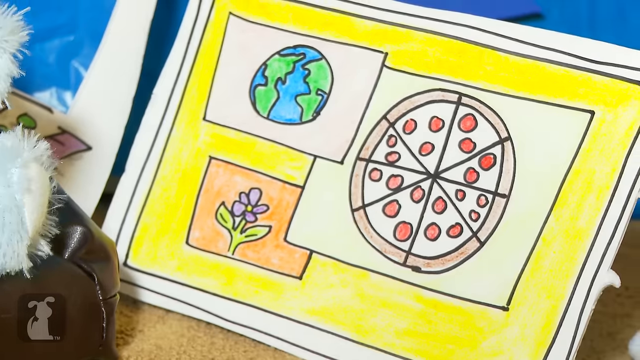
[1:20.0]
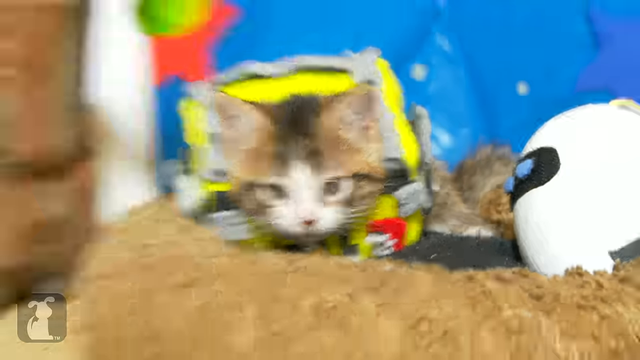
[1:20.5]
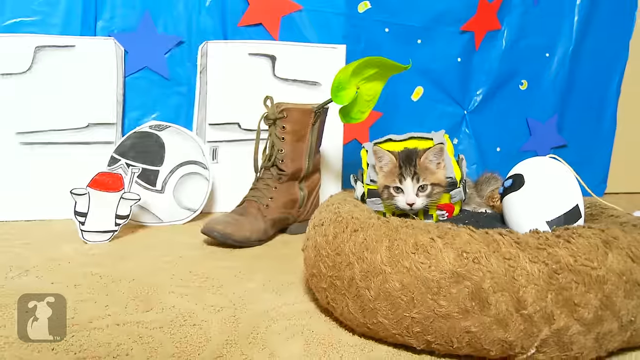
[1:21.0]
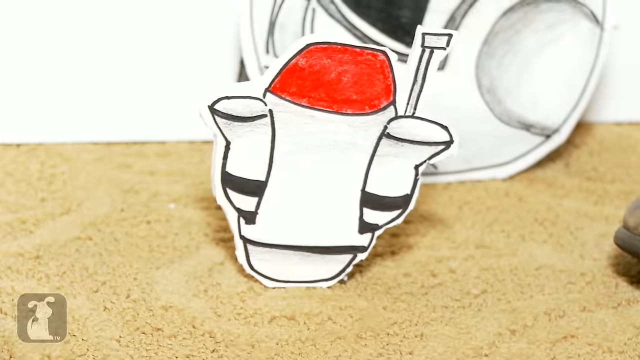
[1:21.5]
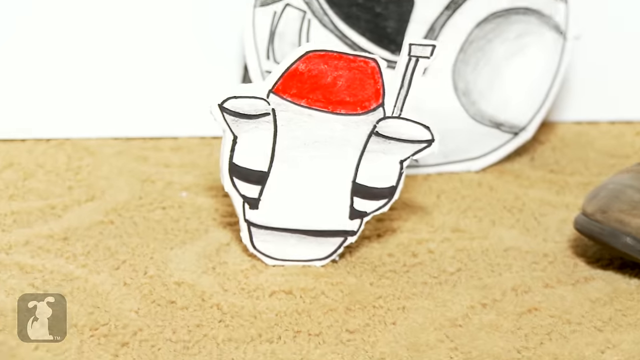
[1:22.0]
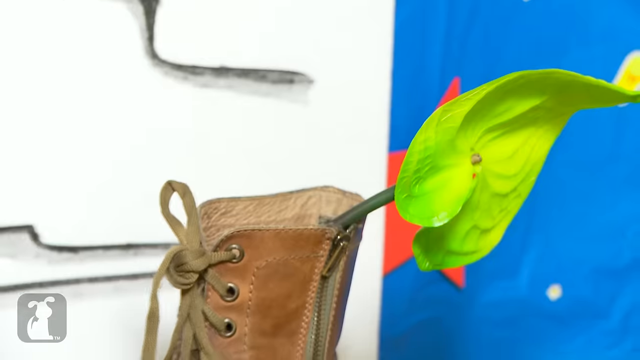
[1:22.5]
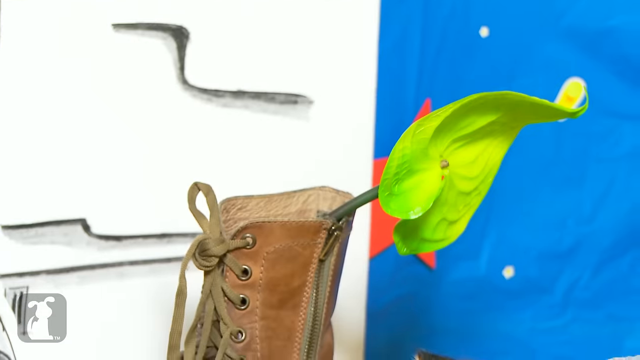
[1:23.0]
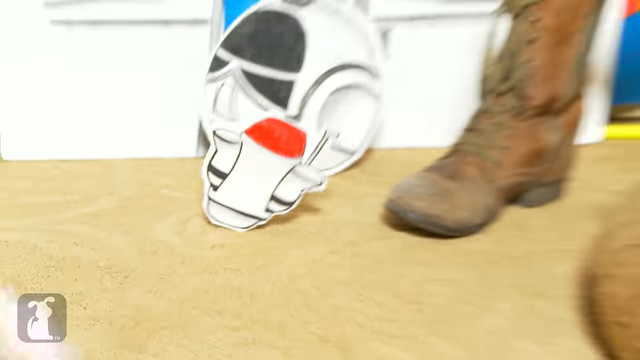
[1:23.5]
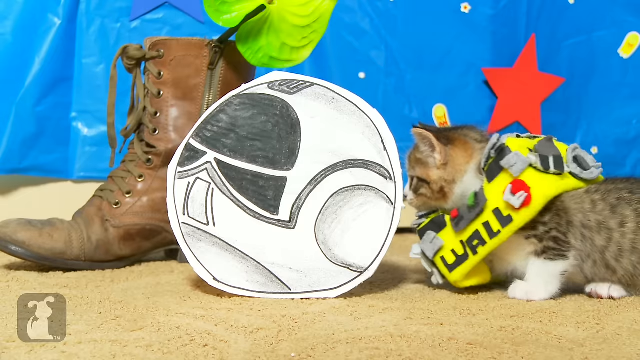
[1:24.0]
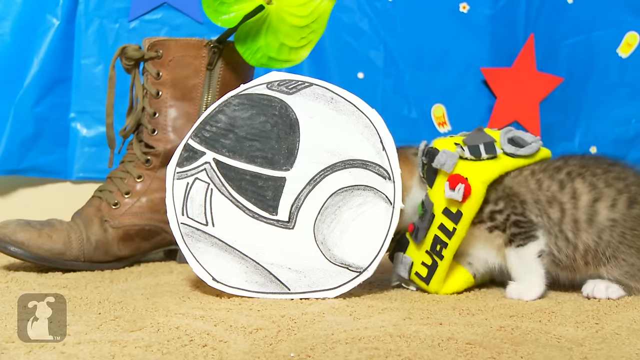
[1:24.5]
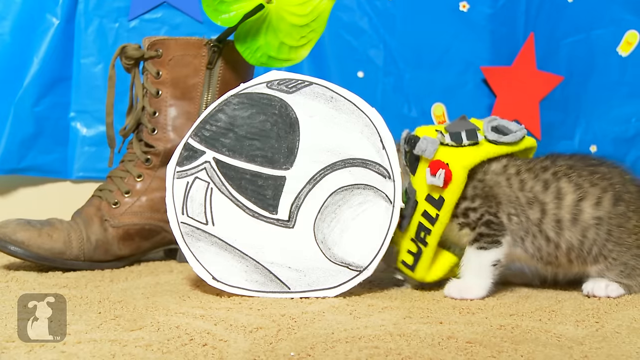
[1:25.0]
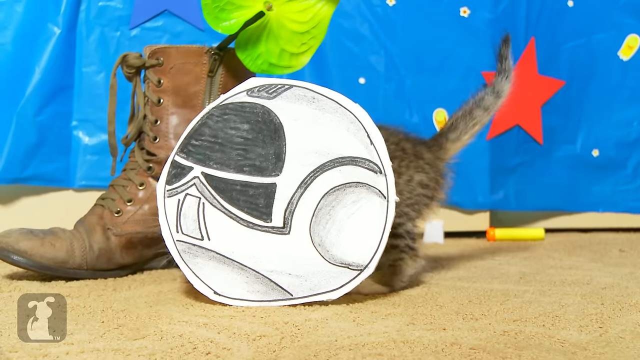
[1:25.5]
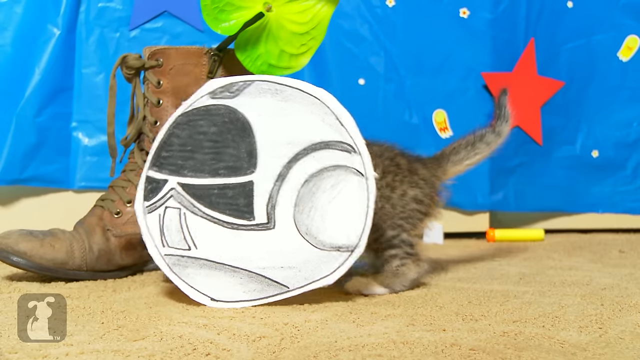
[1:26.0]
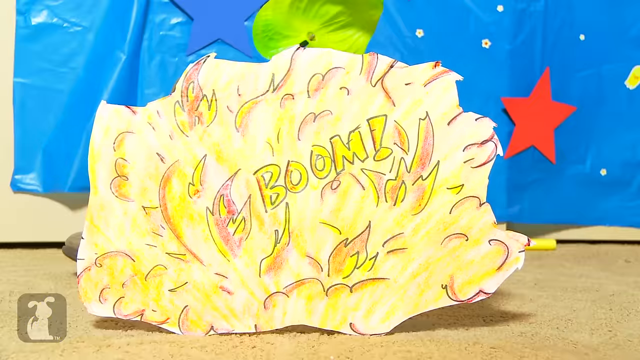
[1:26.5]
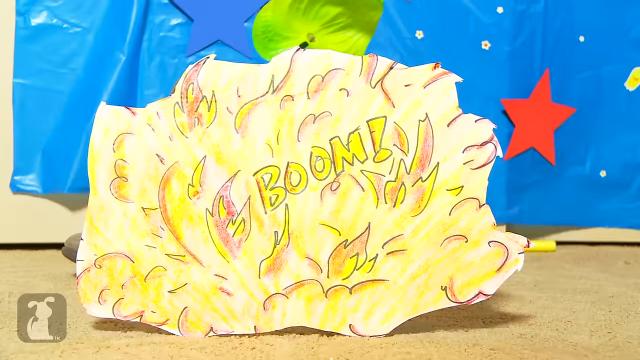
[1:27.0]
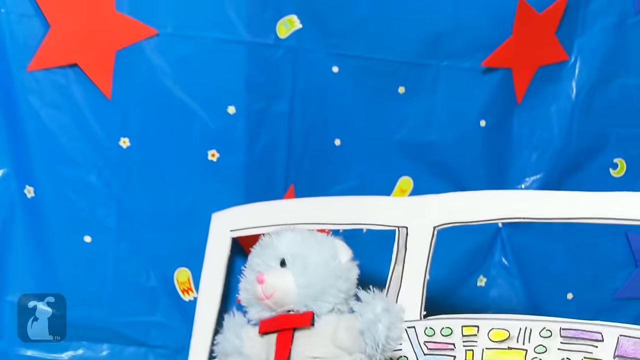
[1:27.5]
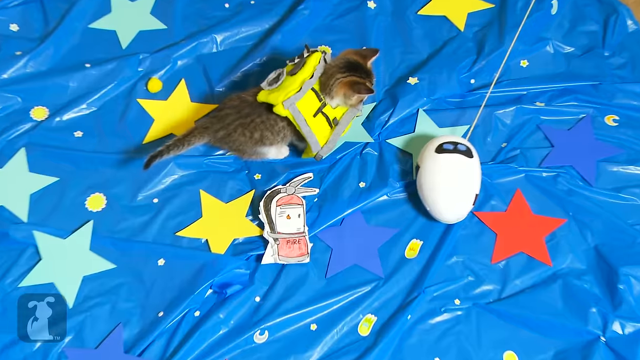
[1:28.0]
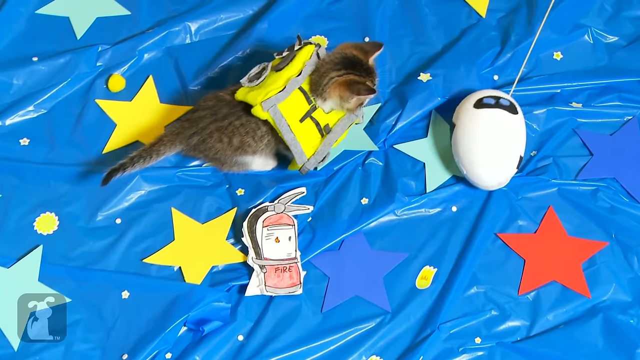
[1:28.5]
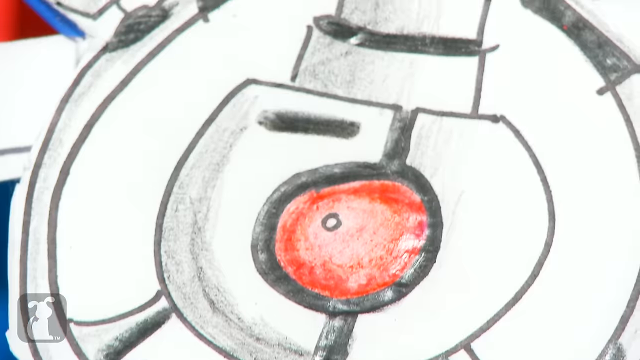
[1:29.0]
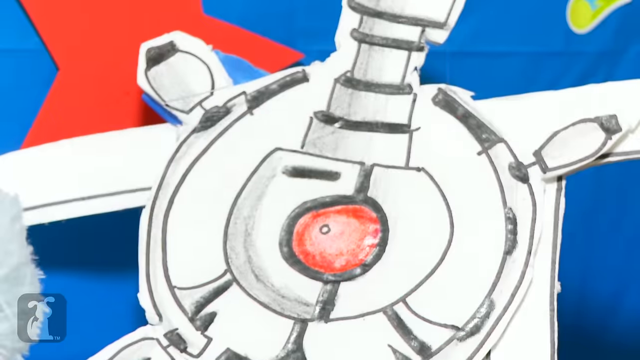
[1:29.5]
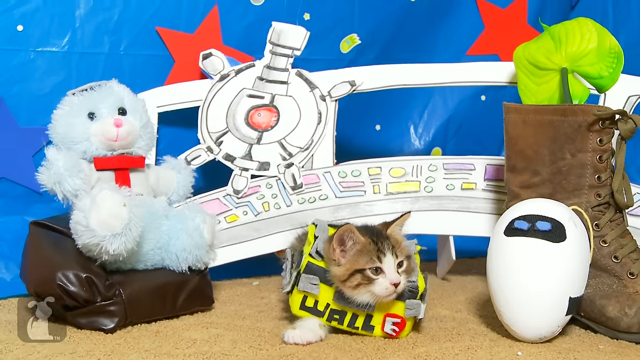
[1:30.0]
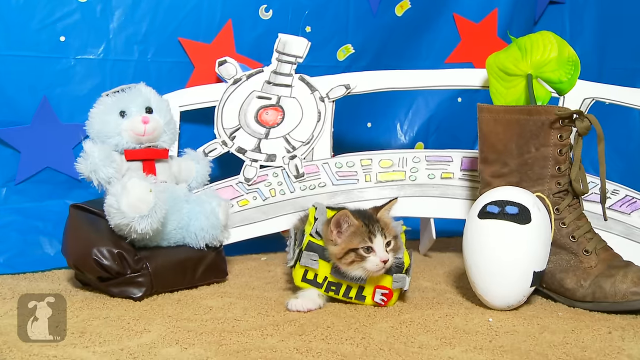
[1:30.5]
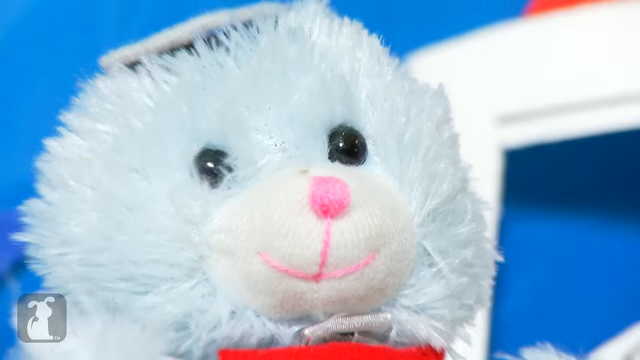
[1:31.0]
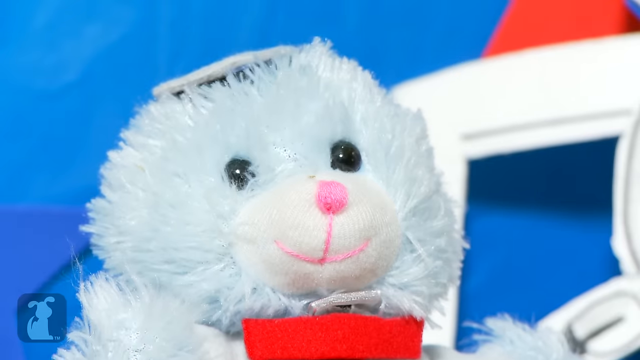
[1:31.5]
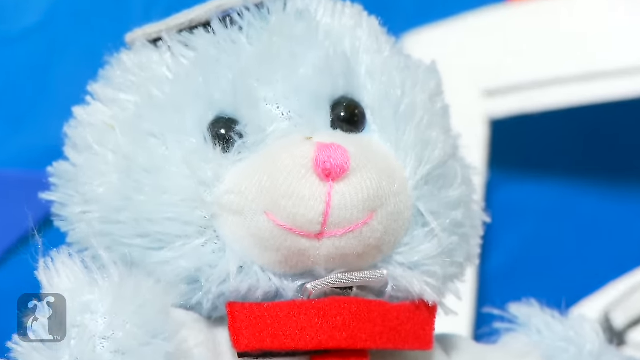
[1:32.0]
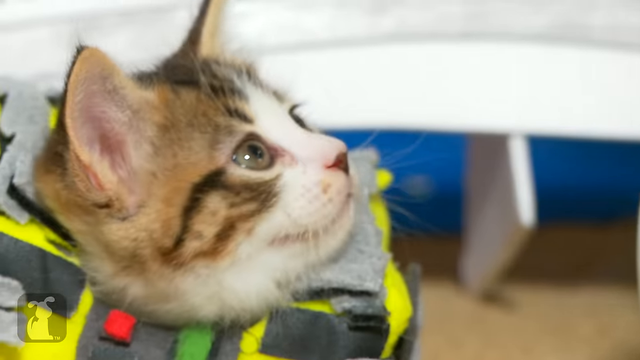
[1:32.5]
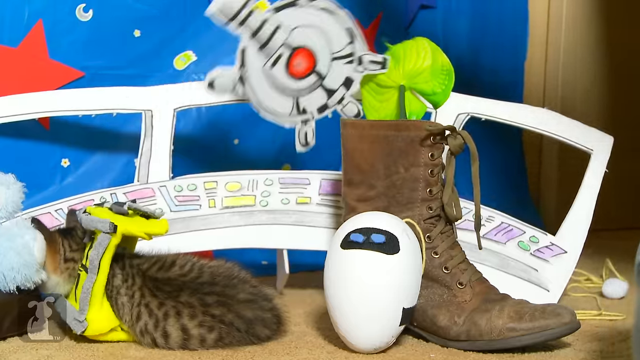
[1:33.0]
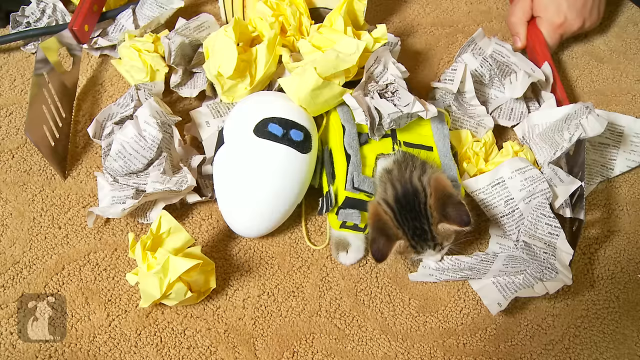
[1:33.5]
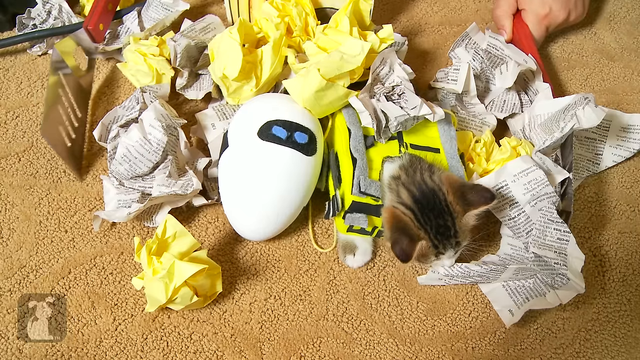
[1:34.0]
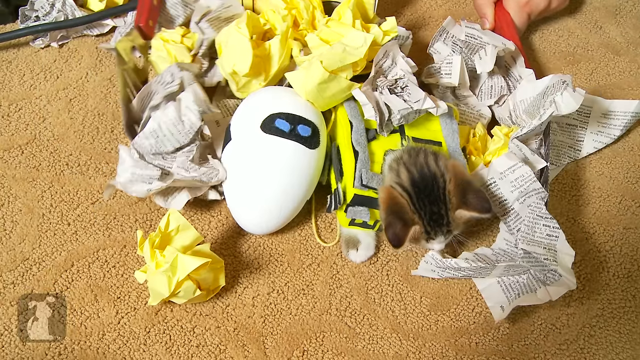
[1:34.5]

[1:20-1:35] The shot quickly opens on an image of what appears to be a pizza. The cat explores the area, surrounded by a whole bunch of different objects, and the trash is still present. There is a boot with a leaf. The cat goes into a spherical object, followed by a drawing of an explosion that says "boom". The background has a bunch of stars and different colors, red and yellow. Most things are drawn in a very kid-like manner, suggesting it is probably a kid project or a kid retelling of a popular story.